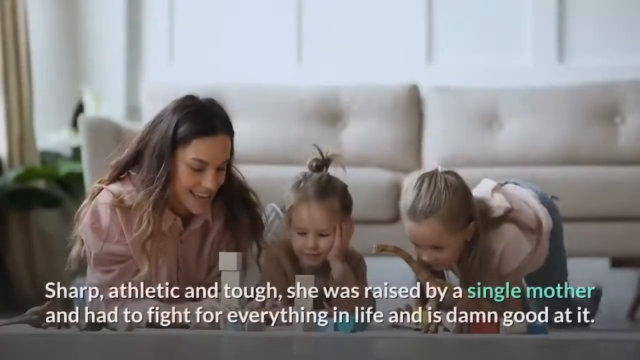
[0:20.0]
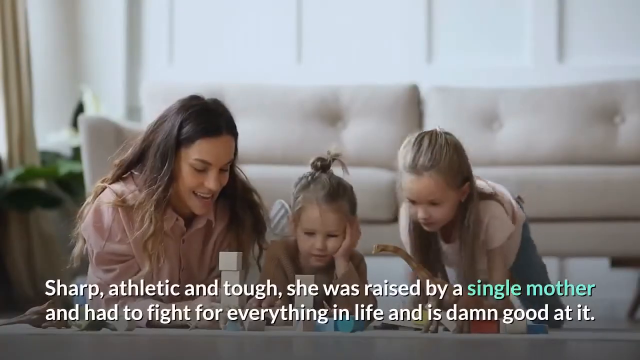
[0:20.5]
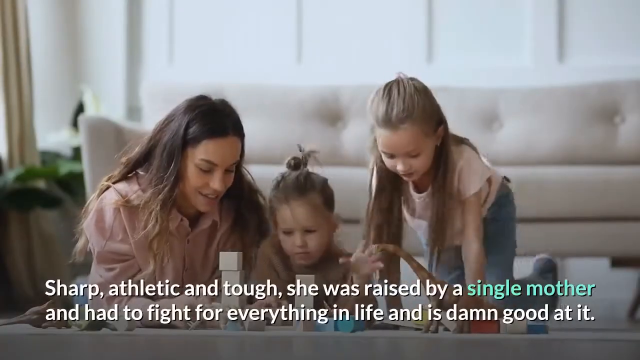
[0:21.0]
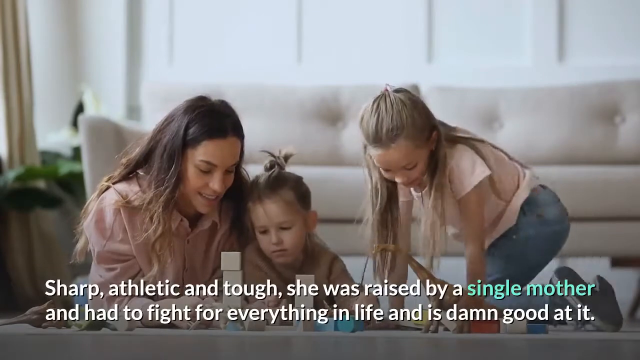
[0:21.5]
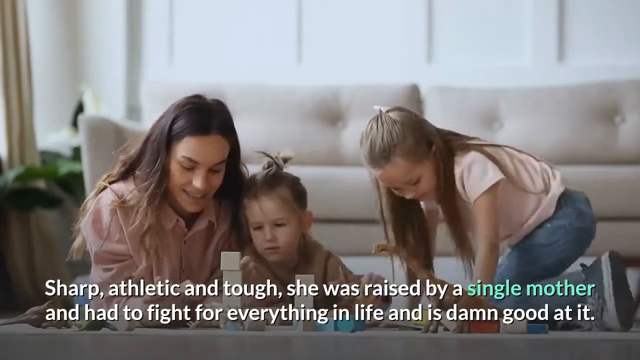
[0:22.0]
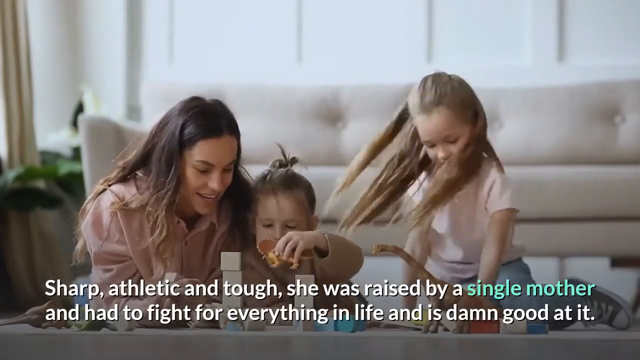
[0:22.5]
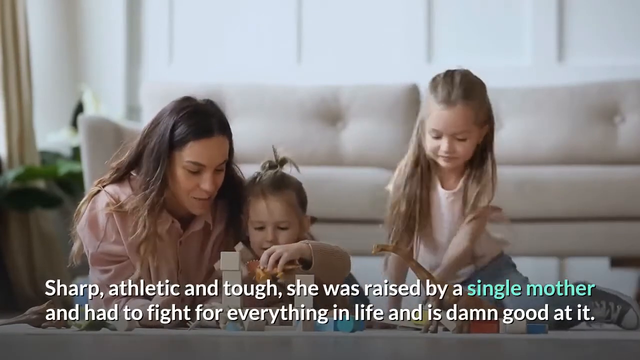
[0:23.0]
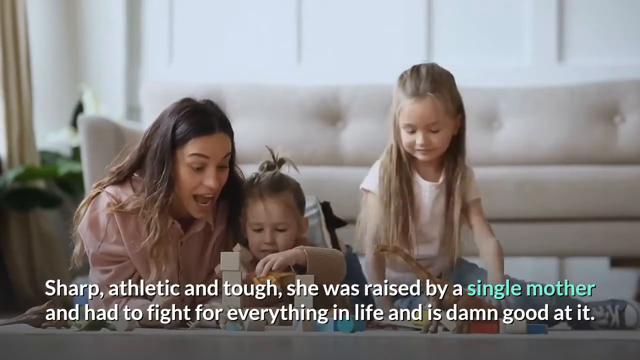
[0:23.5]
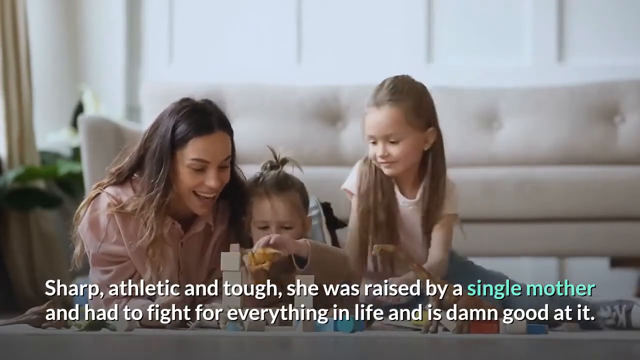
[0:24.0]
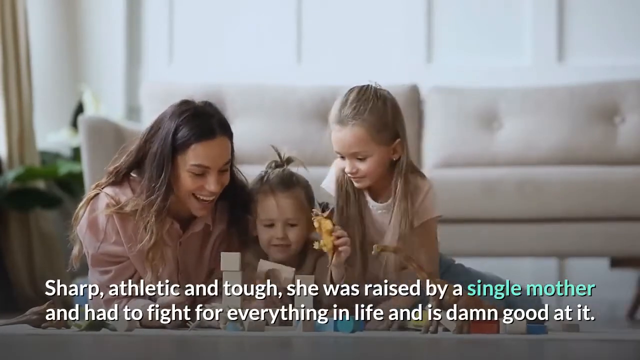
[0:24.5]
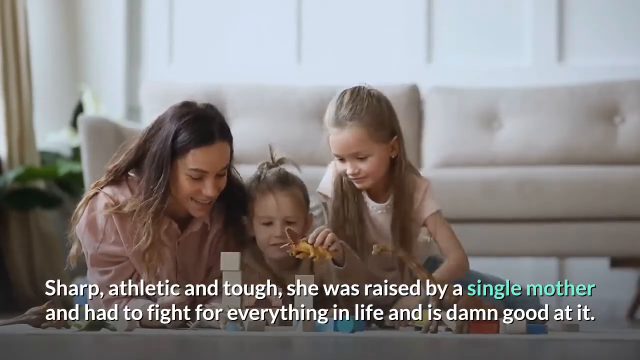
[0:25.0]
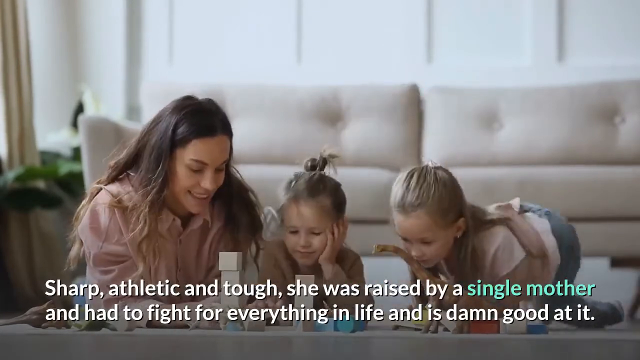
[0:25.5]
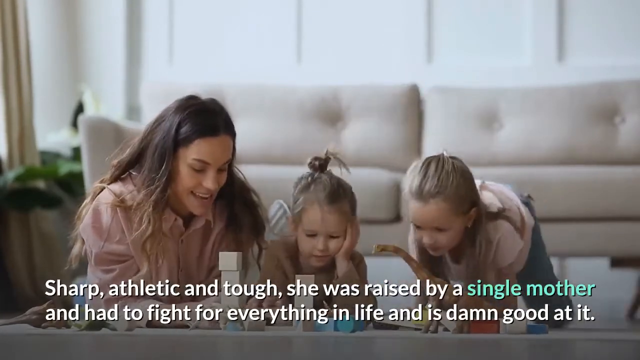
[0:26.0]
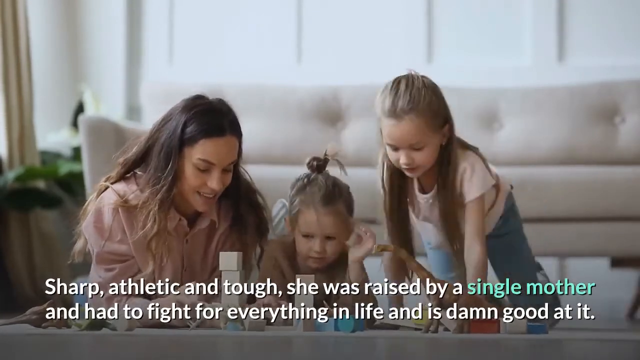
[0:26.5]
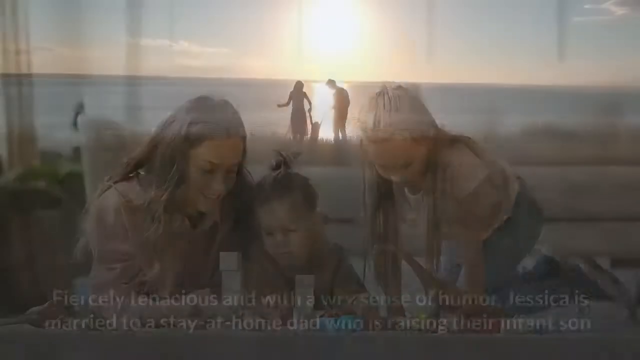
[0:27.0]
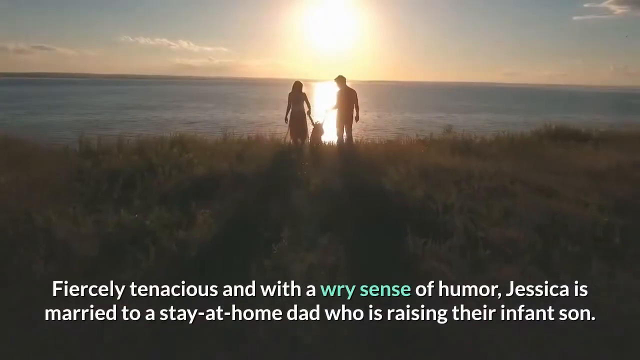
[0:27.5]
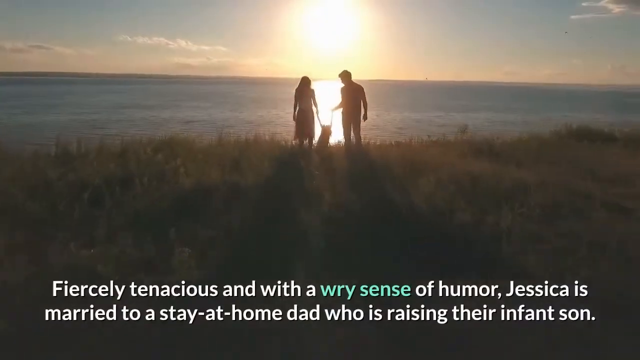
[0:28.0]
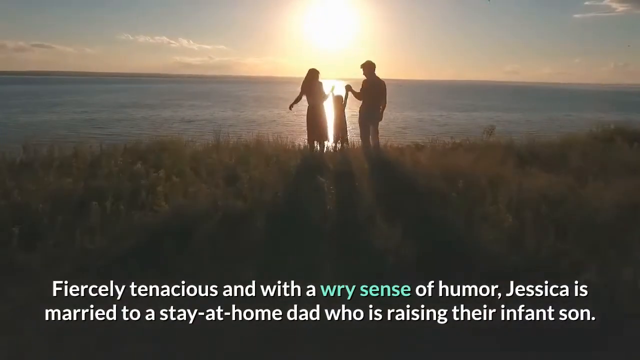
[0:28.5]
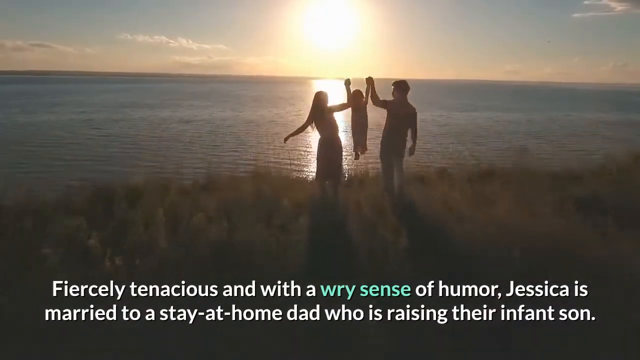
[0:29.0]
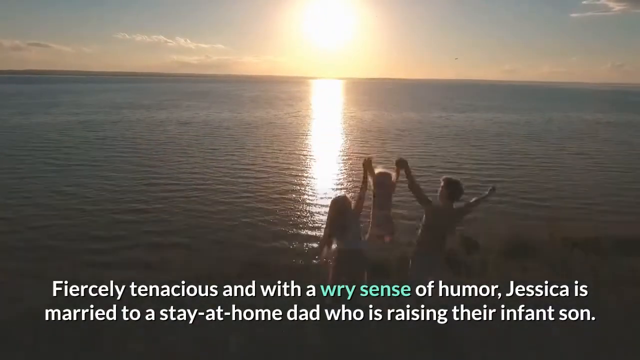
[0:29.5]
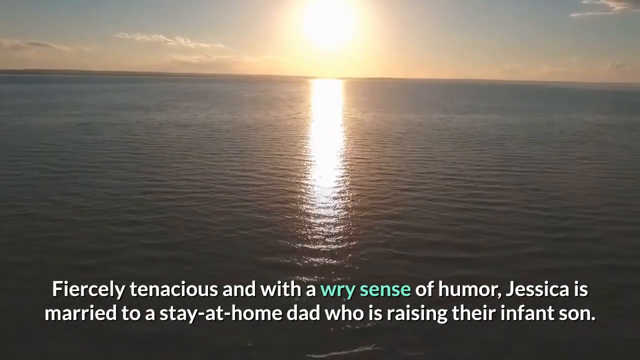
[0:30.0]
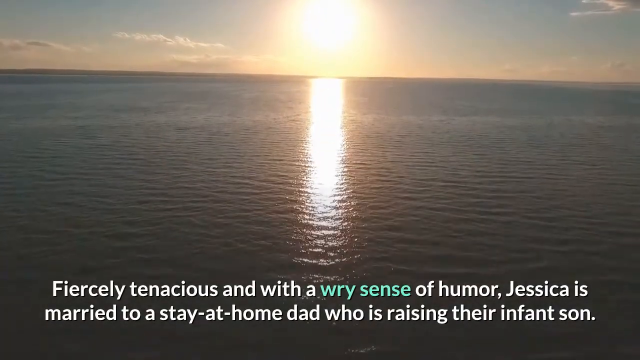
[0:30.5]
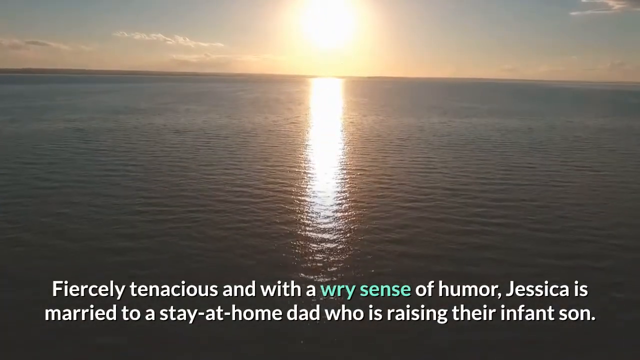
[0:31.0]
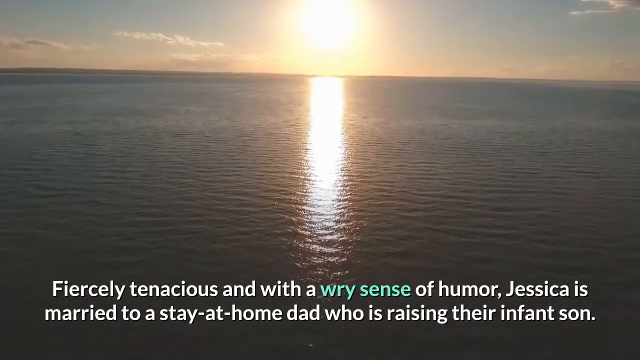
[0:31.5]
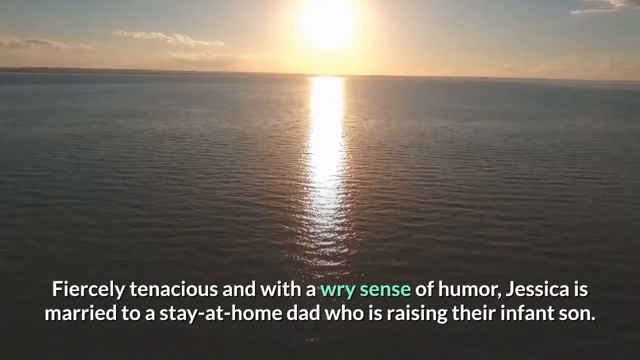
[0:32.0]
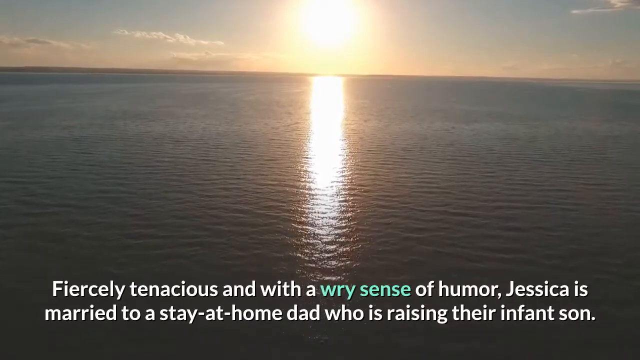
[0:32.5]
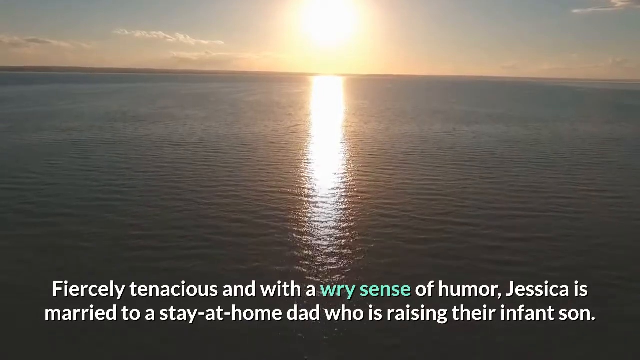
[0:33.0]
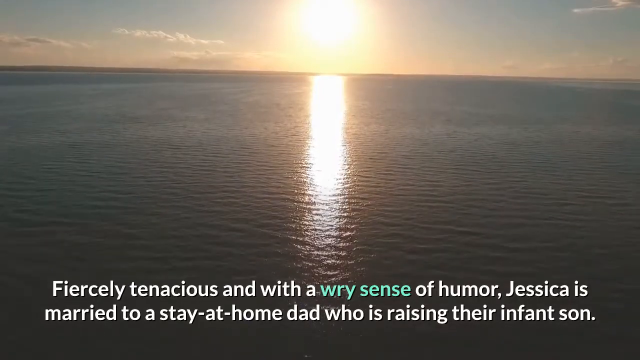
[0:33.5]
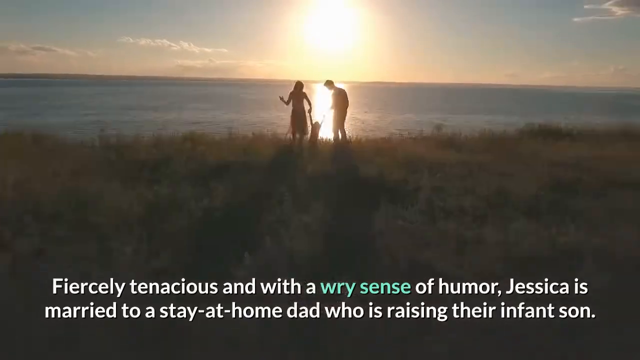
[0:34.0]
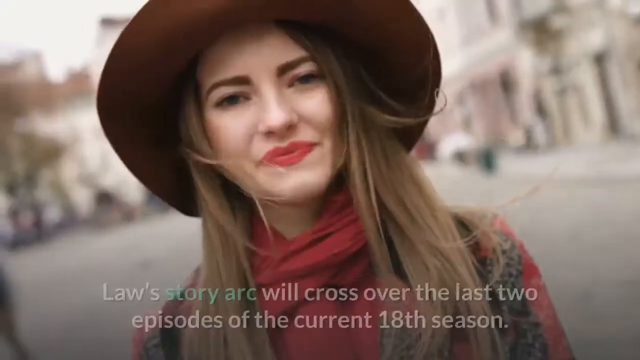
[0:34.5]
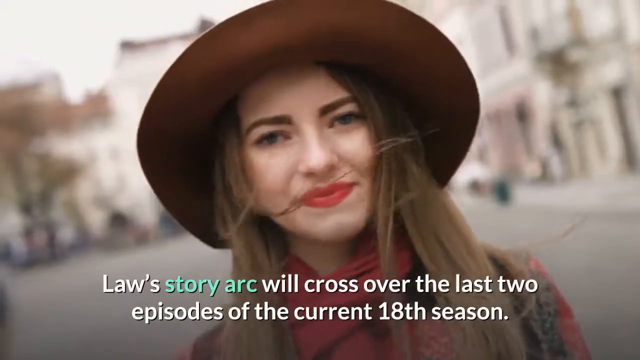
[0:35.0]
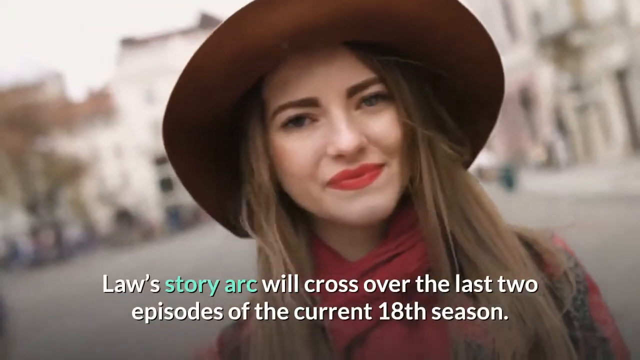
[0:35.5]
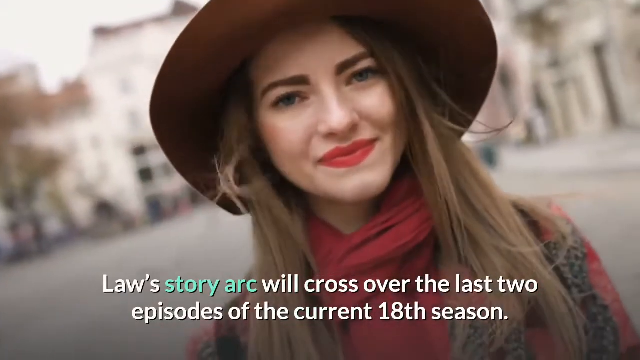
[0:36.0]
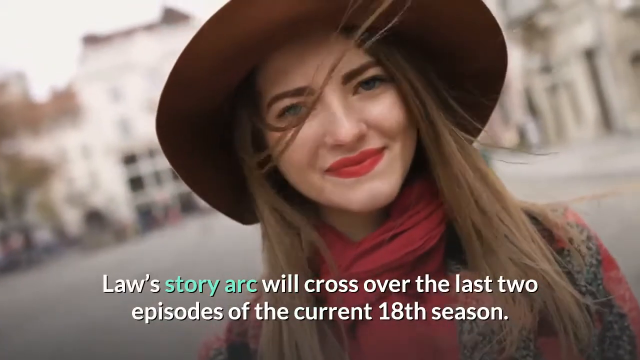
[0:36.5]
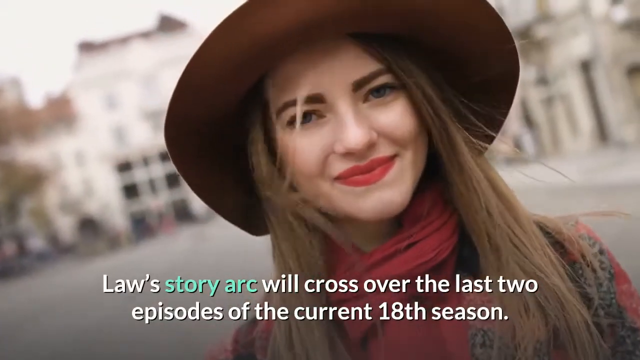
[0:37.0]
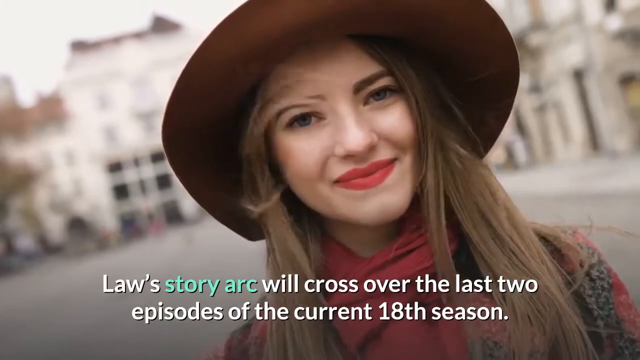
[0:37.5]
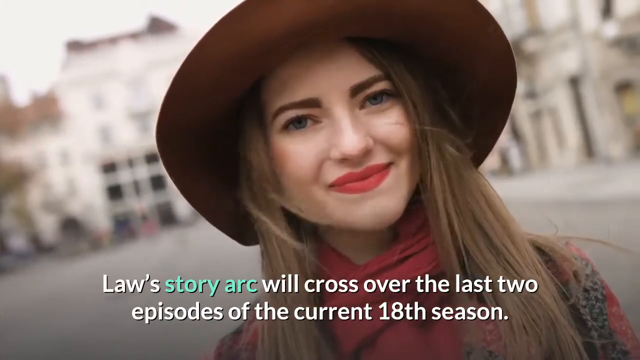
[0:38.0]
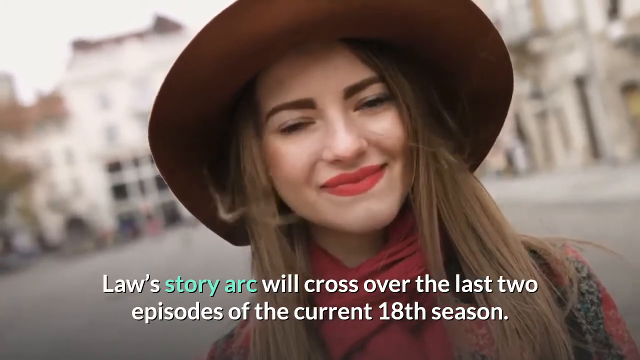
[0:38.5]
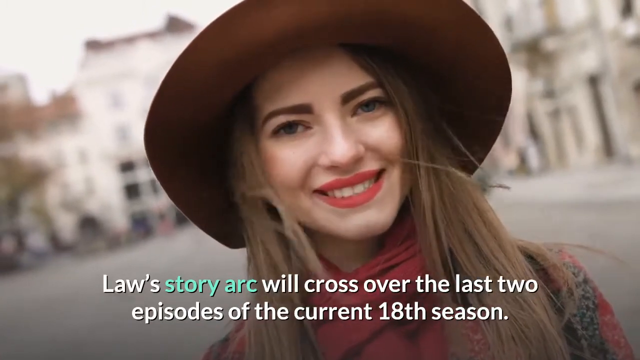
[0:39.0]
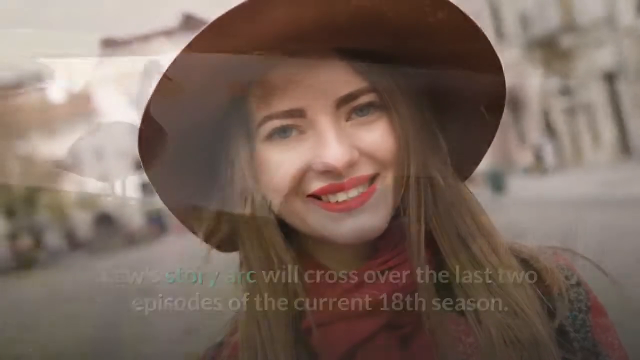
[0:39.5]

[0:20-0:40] A mother and her two daughters lie on the living room floor, stacking building blocks in front of them. The girl in the middle picks up a plastic dinosaur and begins to stack it on top of the blocks. Next, a mother, a father and their child stand on a cliff looking out over the ocean. As the camera gets close to them, they pick the child up between them and raise the child into the air. The shot looks like it was taken by a drone, which flies over them and off over the ocean, with the sun shining across the water. A woman then stands outside right in front of the camera, smiling, her hair blowing. After that, two white swans stand on the bank of a pond. The swan on the right has its head down as if grazing on the grass. The swan on the left stands looking out over the water with its neck held high. The sun reflects off the surface of the pond, which is slightly rippled as if the wind is blowing.